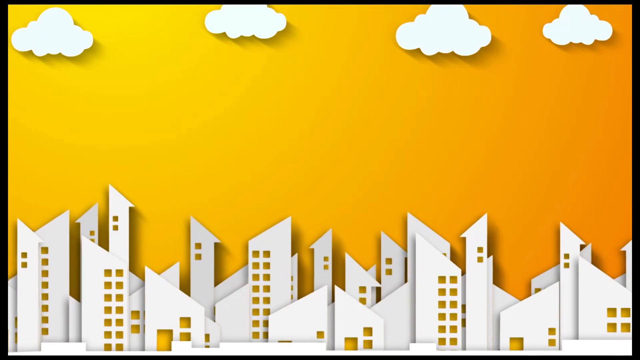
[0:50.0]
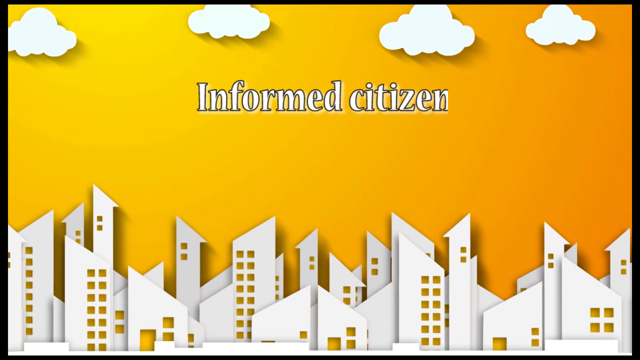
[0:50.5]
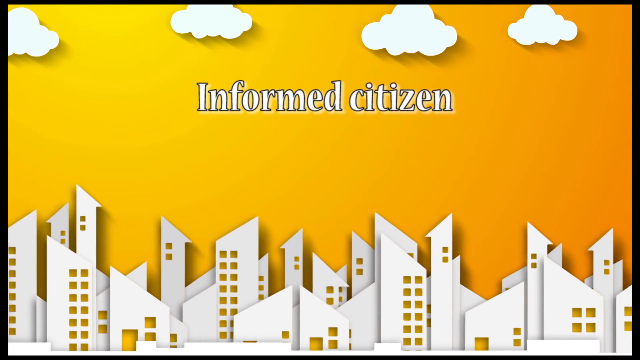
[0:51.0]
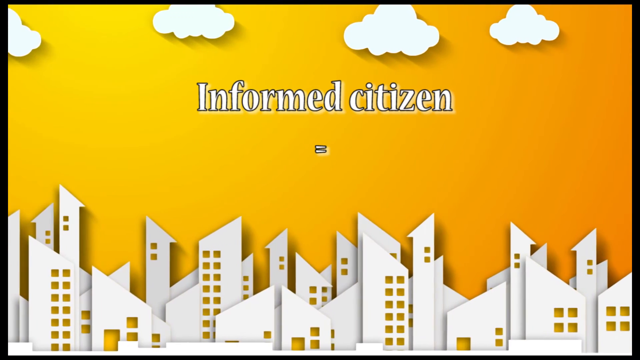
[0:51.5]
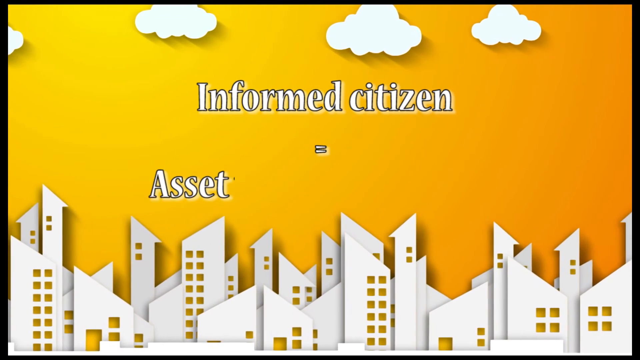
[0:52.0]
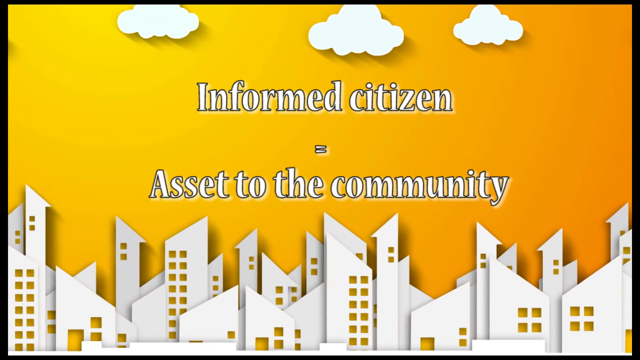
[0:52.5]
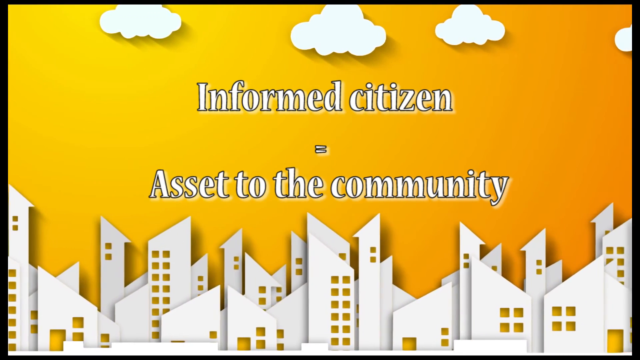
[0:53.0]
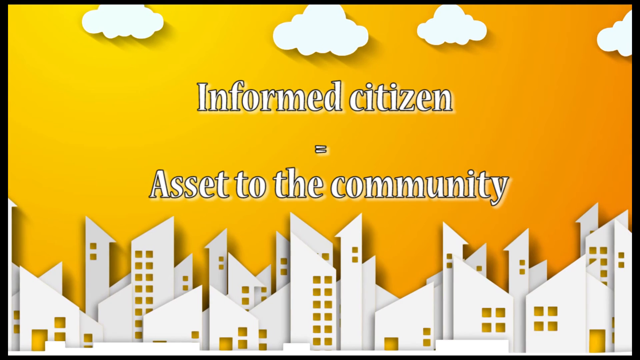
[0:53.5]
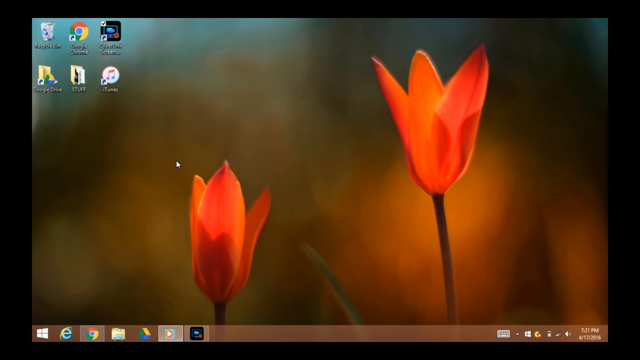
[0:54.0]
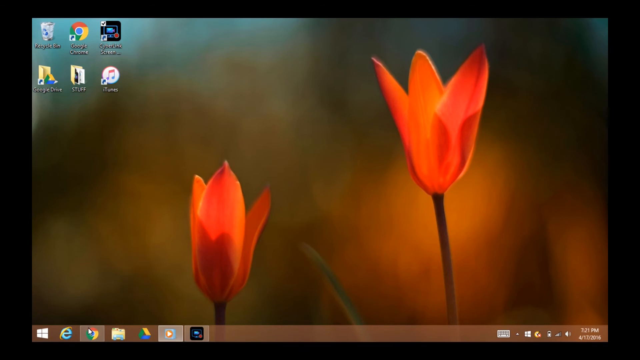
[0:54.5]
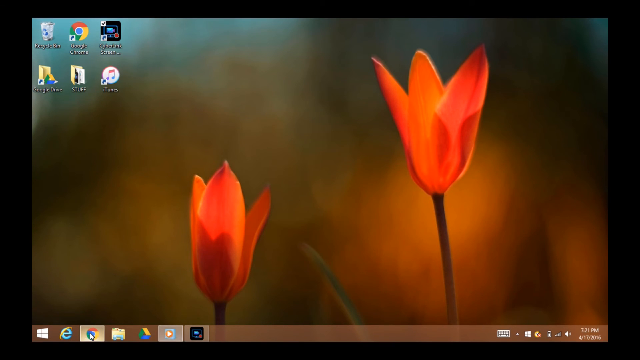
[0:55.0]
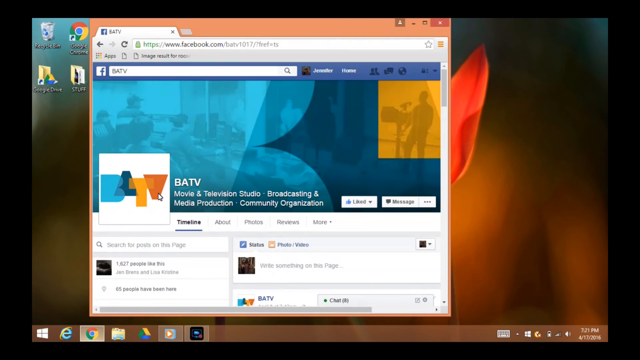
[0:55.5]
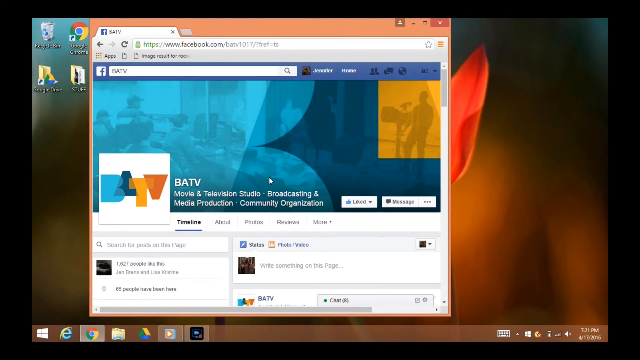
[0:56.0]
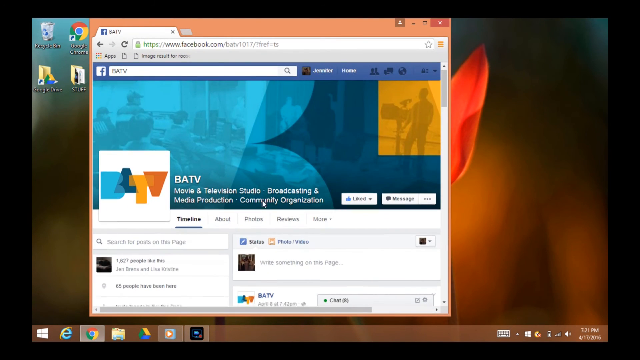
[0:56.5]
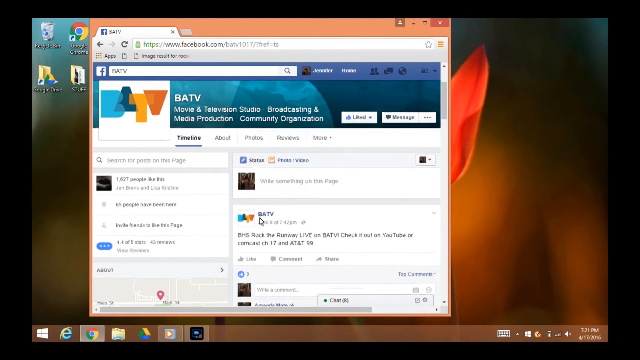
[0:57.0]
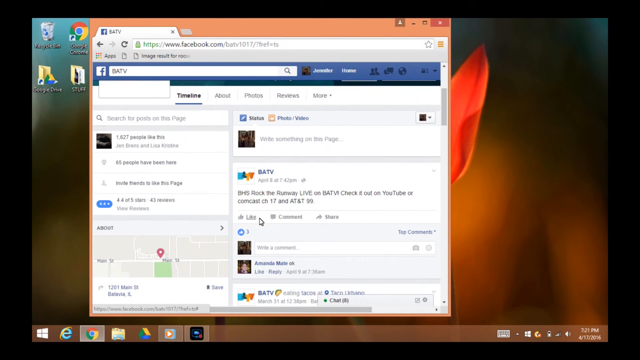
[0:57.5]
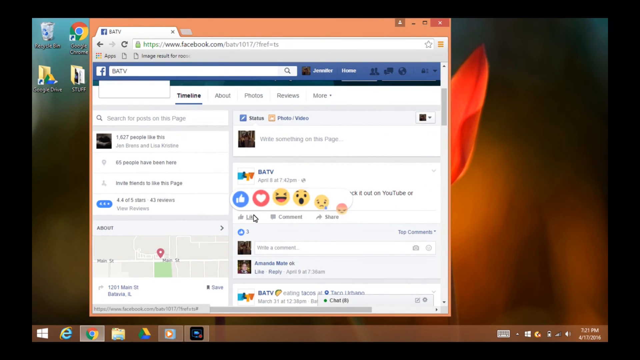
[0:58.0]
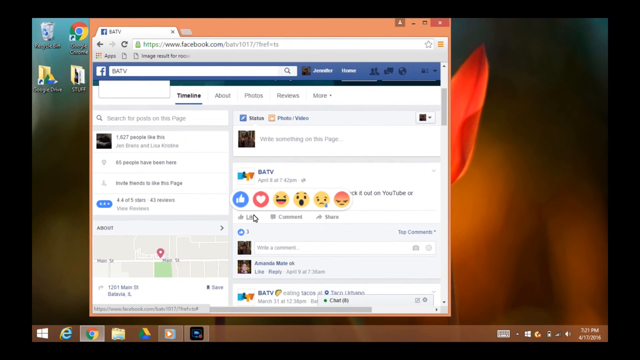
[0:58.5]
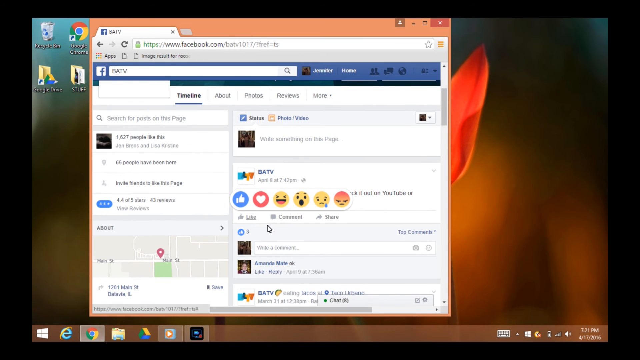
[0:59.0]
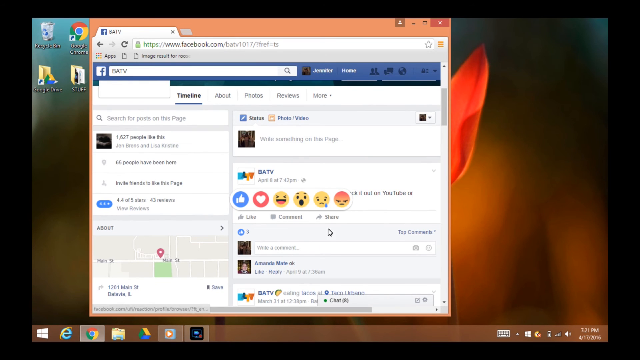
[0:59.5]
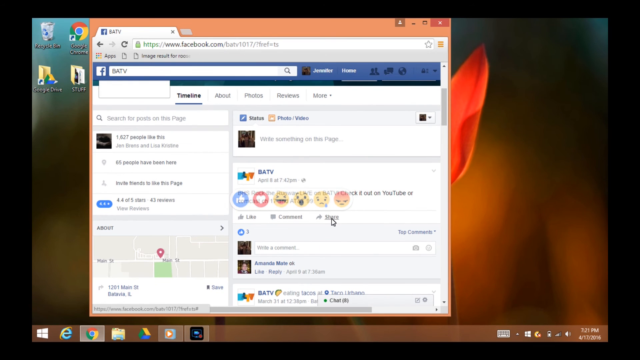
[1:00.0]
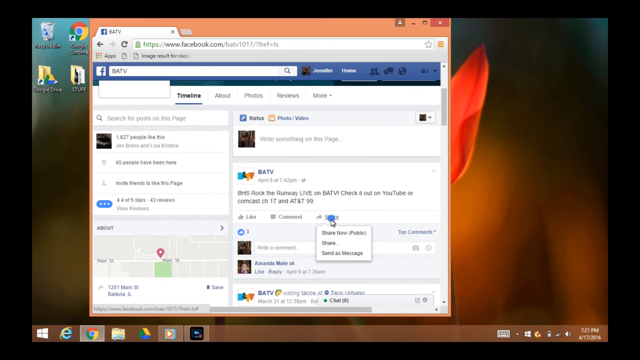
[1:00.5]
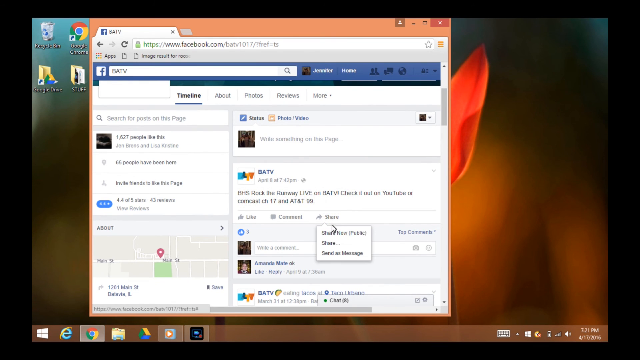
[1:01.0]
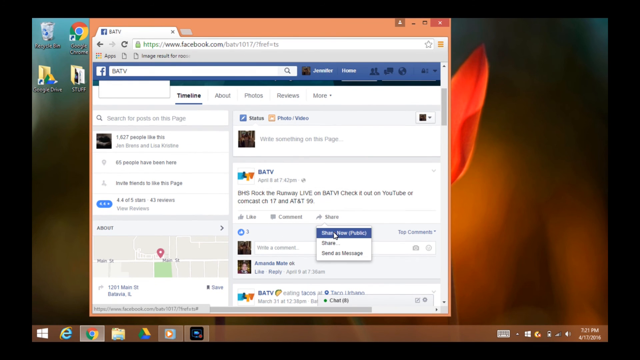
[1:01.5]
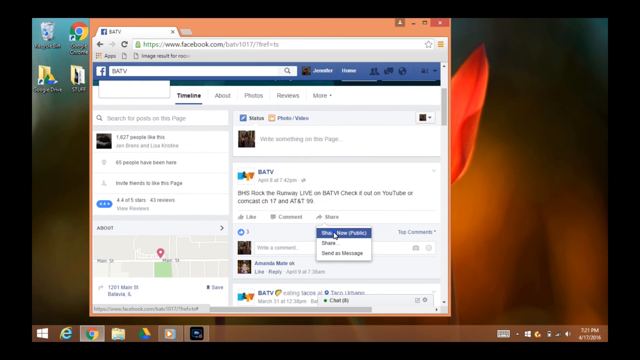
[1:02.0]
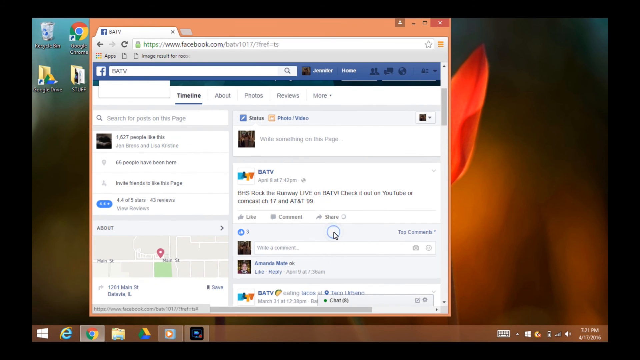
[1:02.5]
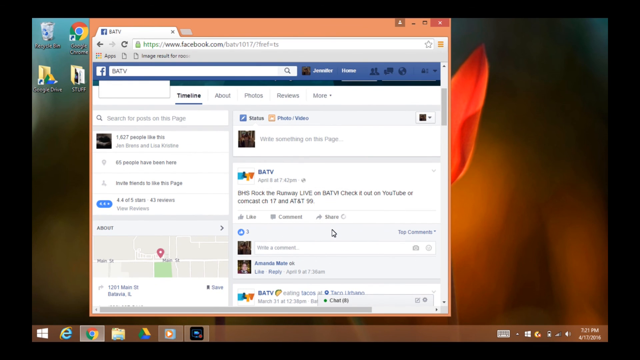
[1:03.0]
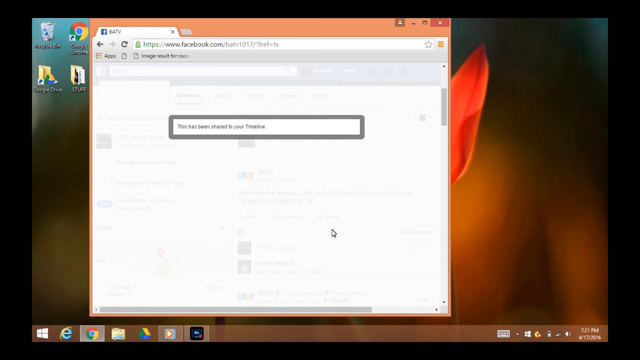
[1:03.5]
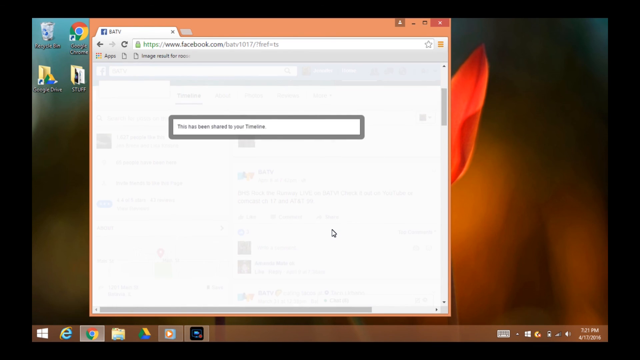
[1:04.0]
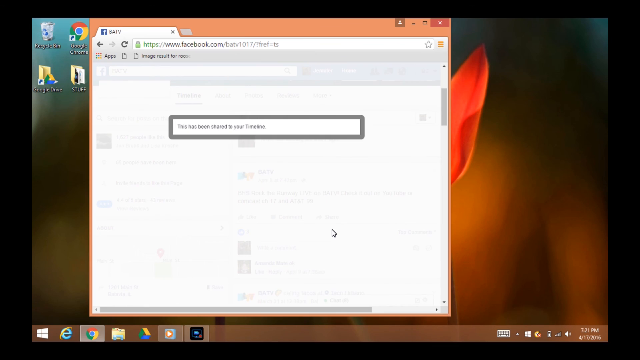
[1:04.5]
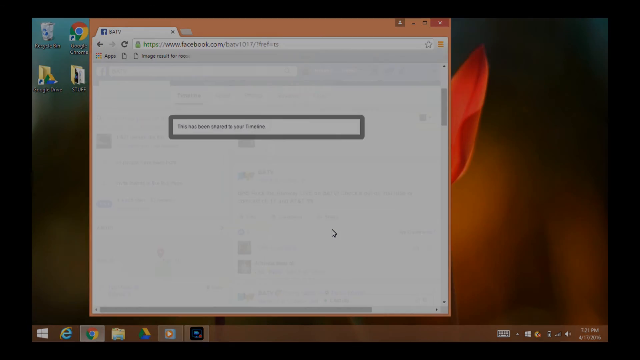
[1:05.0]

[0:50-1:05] Someone is clicking on a laptop that shows some laughing emojis. Designs of houses and tall buildings appear, for Portavia Public School District, Portavia Park and Portavia Public Library. The laptop has a screen saver of flowers and holds many movies, cartoons and other things; someone is clicking through it, selecting files and going through them. Cars appear: a black car, a van and a white car. A woman with blonde hair is running, wearing running shoes, a black shirt with white trims and a sleeveless black and white top. Behind her are three people whose gender is unclear. On the road there is a van and cars in white, black and green. The cars stop at the robots, and the robot appears to be green, as pedestrians are crossing.